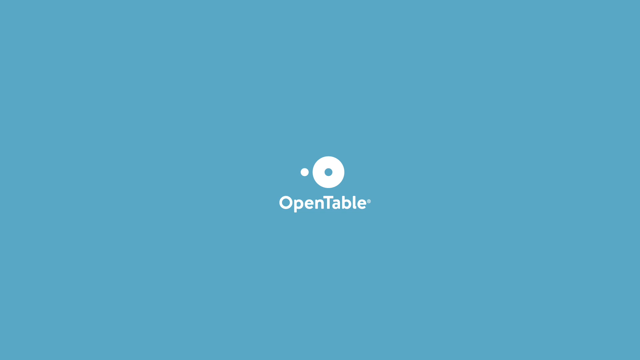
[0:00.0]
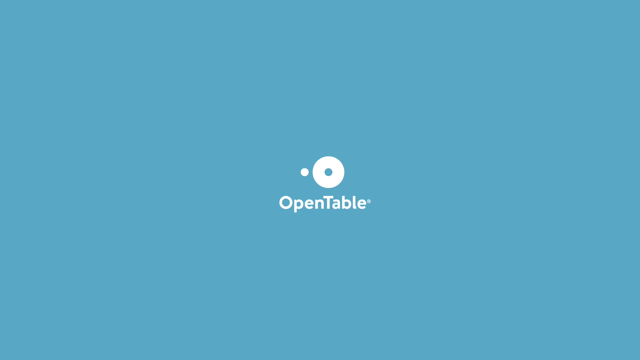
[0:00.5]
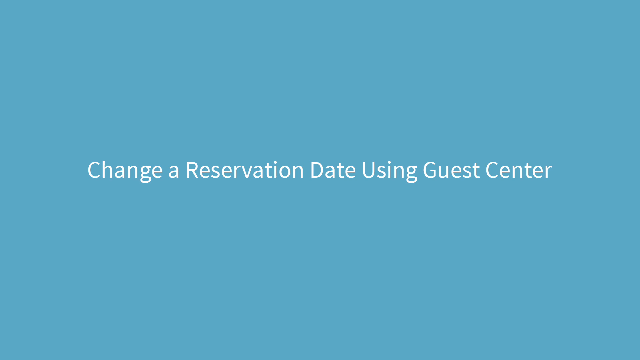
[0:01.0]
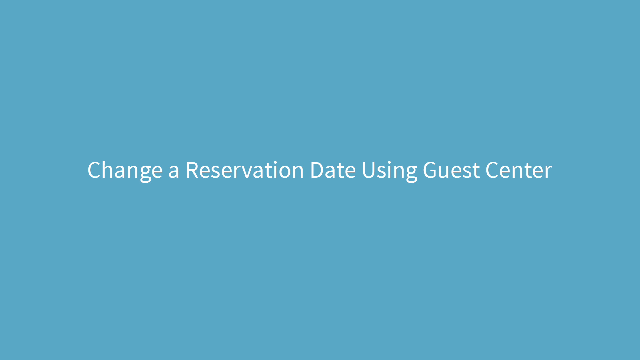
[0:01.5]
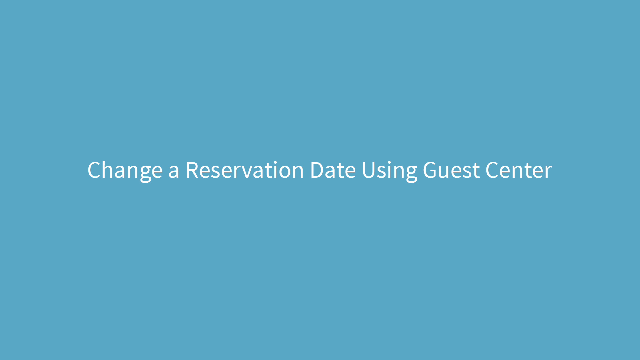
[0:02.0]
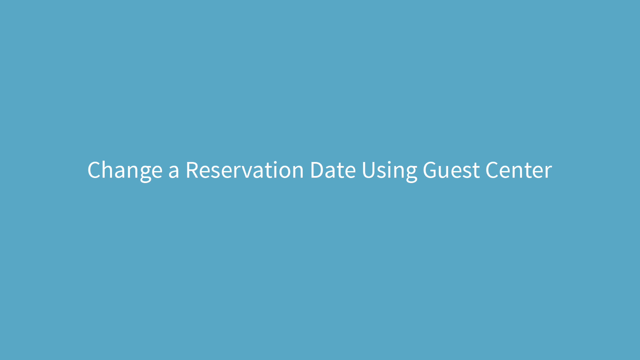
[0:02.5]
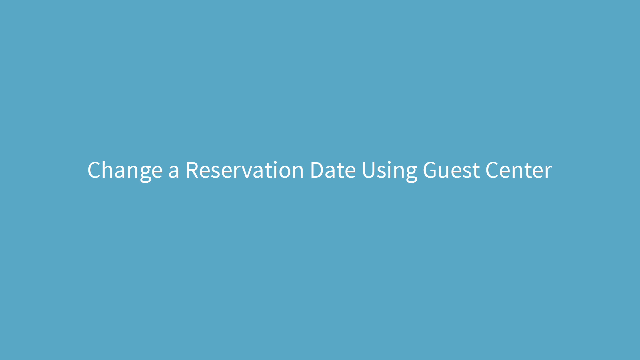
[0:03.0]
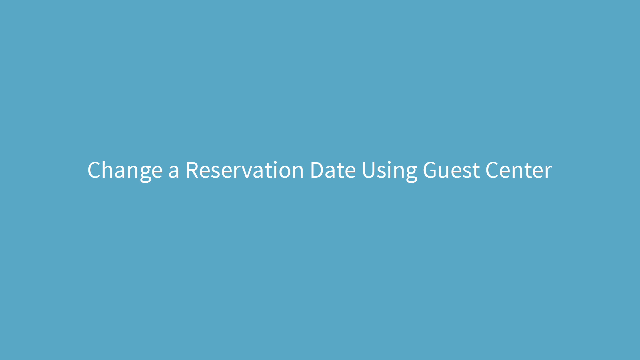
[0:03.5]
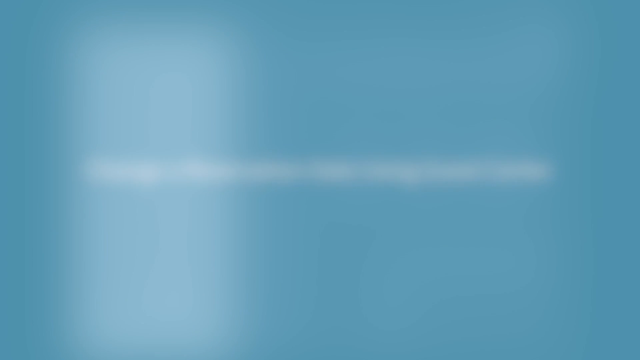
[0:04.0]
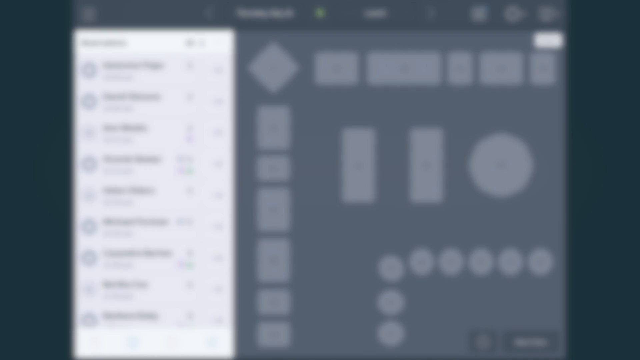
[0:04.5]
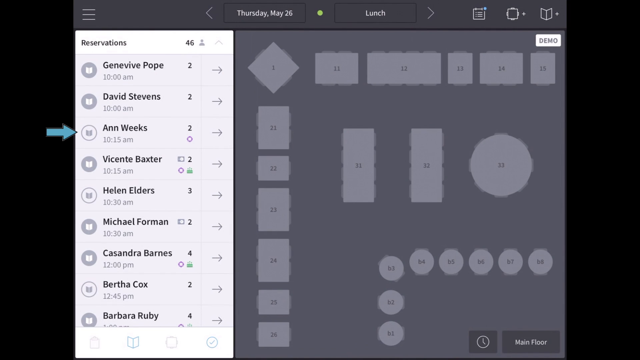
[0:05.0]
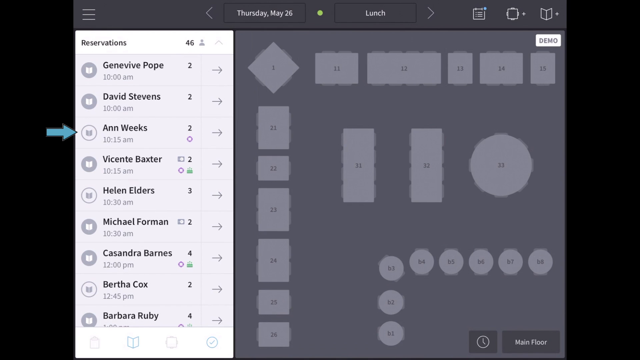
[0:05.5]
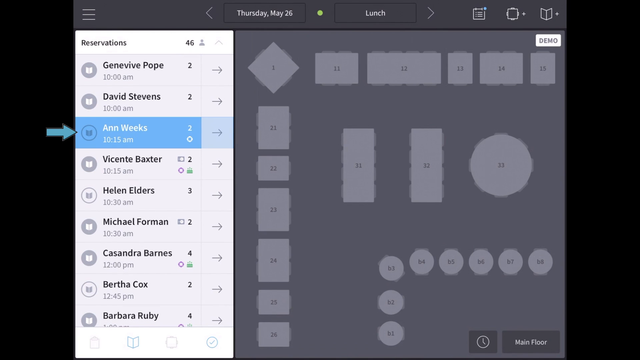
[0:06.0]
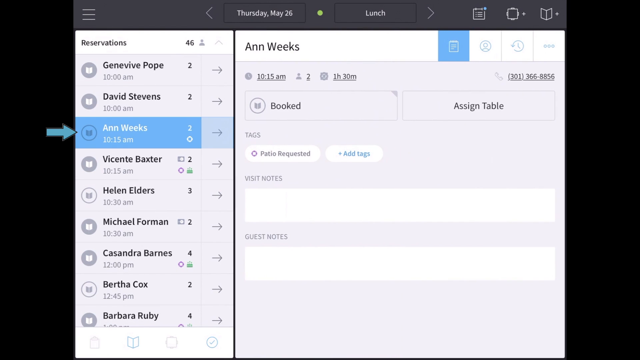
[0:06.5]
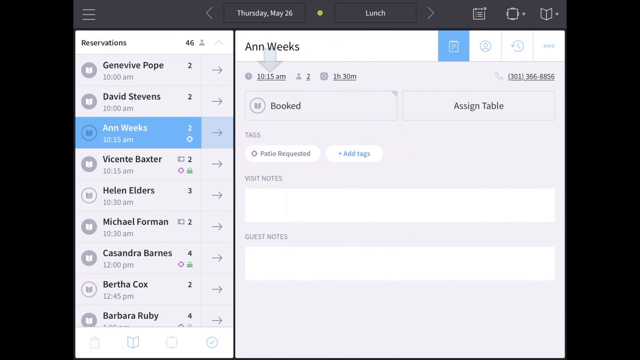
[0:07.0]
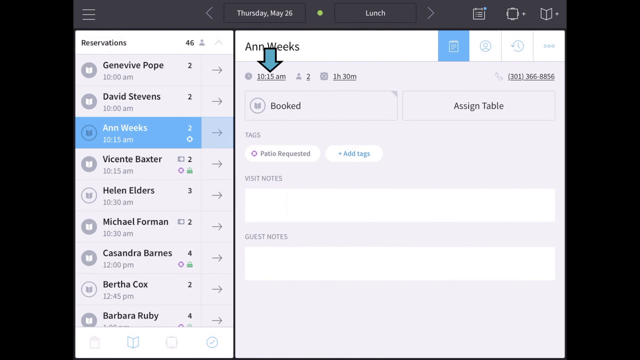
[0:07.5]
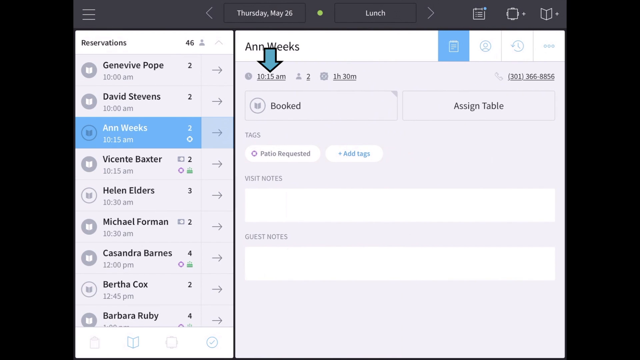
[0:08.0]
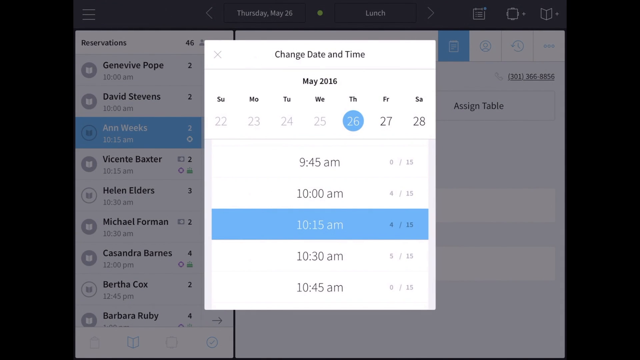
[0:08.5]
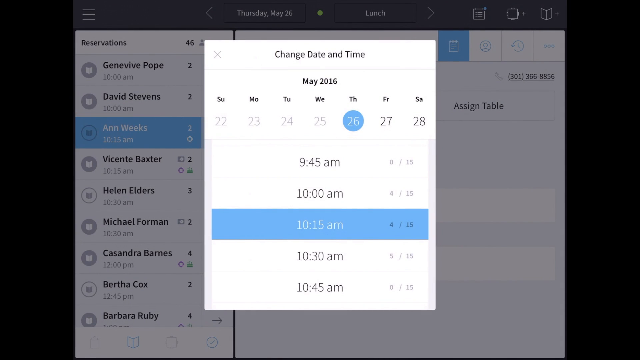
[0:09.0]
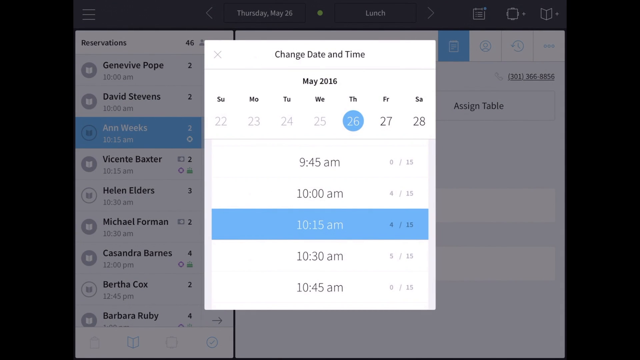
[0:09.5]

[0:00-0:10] The video illustrates the OpenTable software. It opens on the OpenTable logo: a teal background with white lettering and a white circle, or white annular region, with a small circle inside. That small circle has been moved outside the larger circle so that it looks like a chair at a table, an opening. The words on the slide read "open table" and "change a reservation date using guest center". A pull-down menu then appears, giving a name, and selecting it shows the reservation time and information.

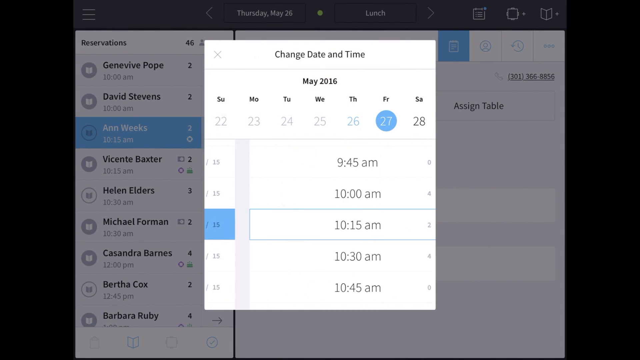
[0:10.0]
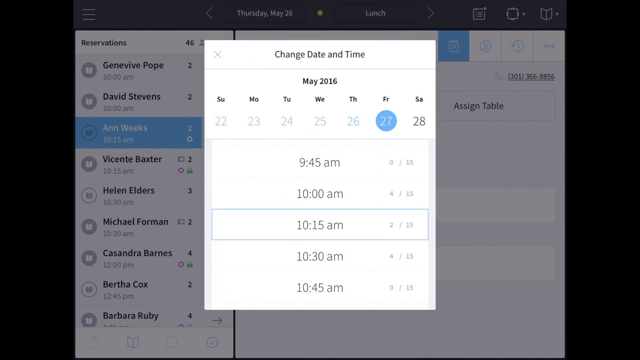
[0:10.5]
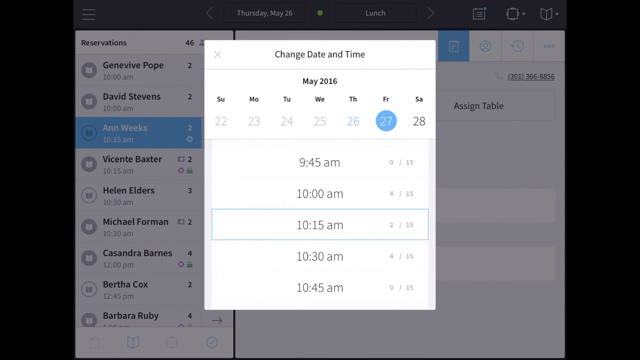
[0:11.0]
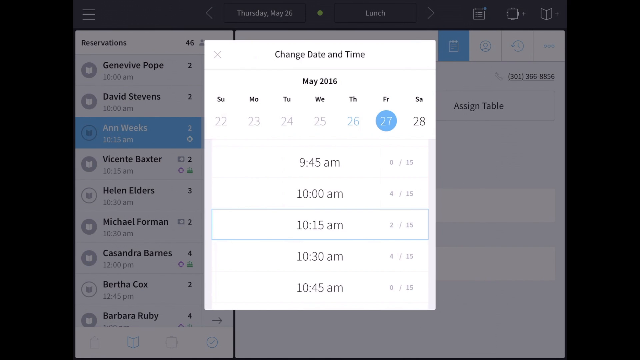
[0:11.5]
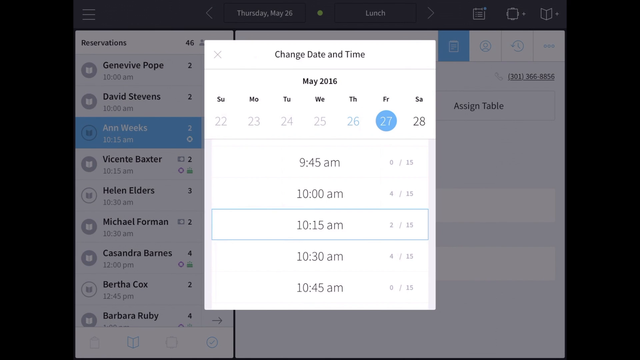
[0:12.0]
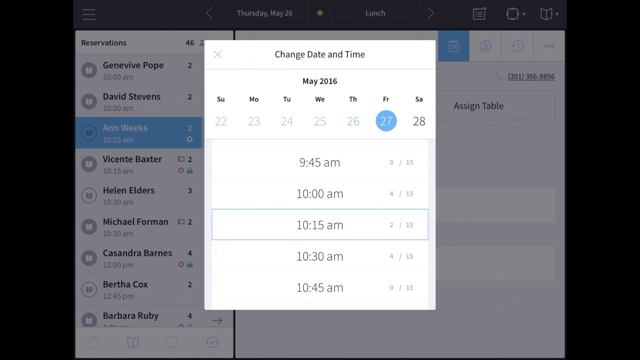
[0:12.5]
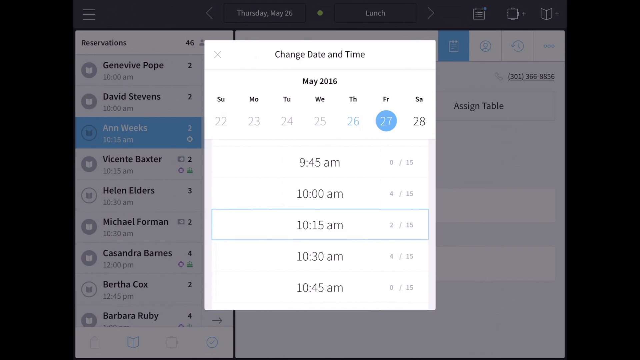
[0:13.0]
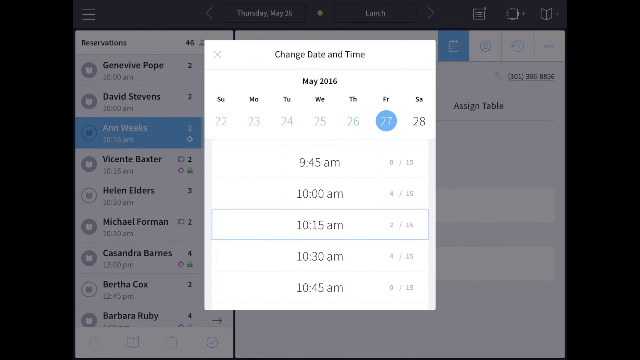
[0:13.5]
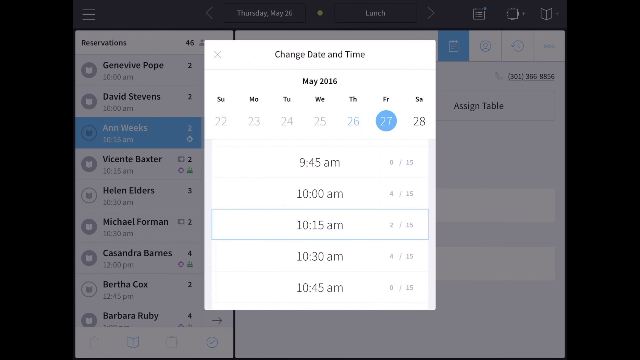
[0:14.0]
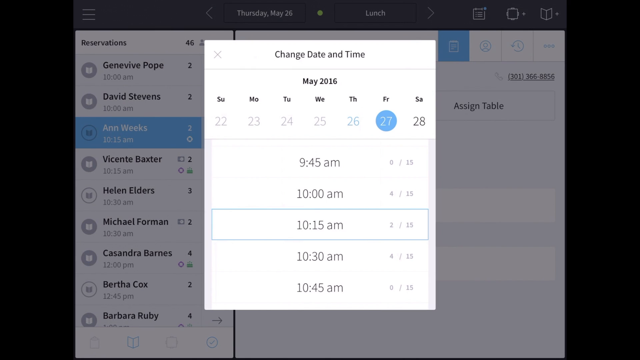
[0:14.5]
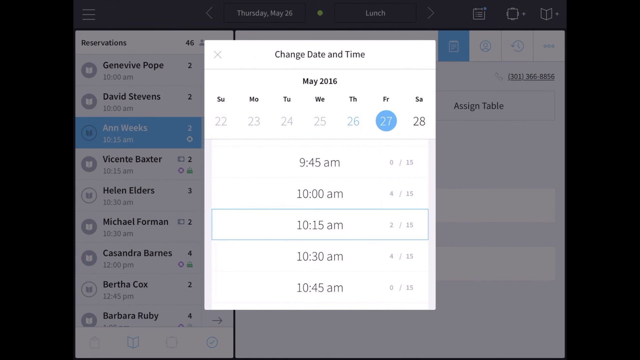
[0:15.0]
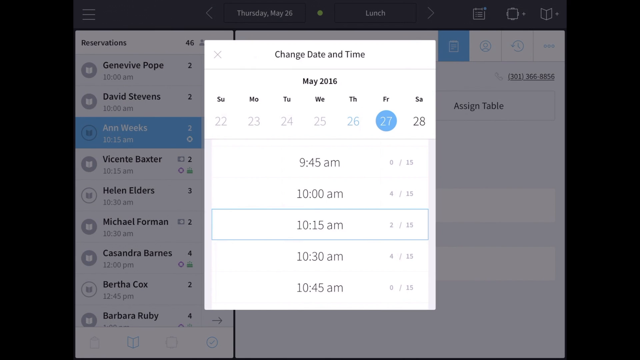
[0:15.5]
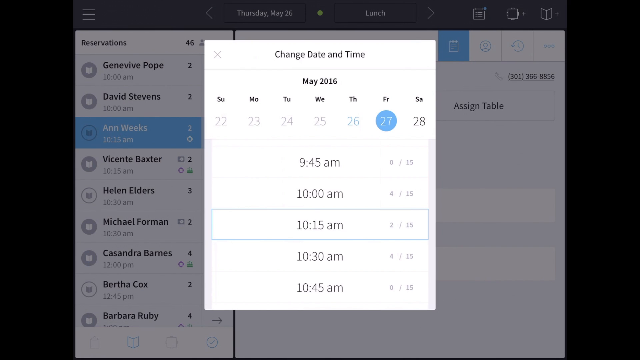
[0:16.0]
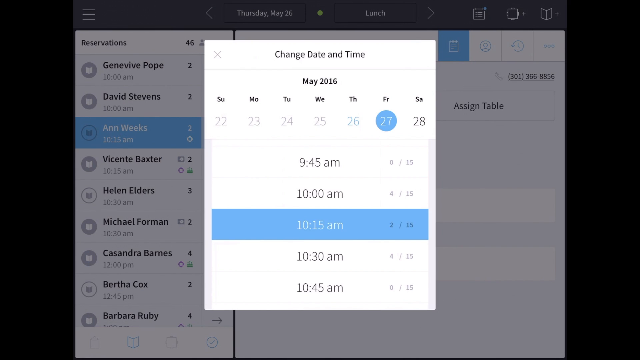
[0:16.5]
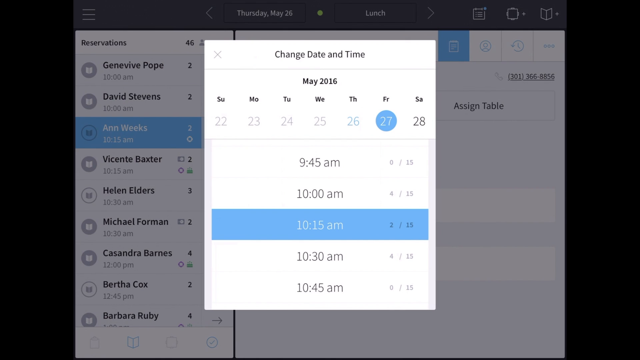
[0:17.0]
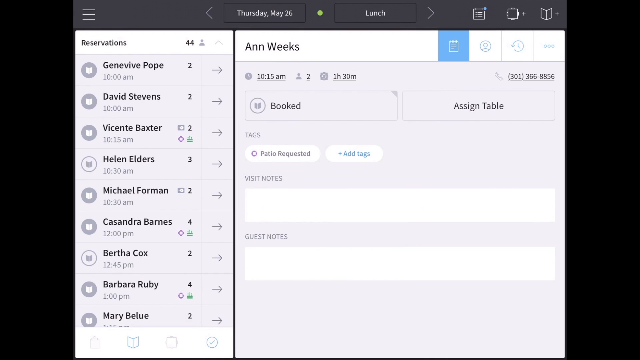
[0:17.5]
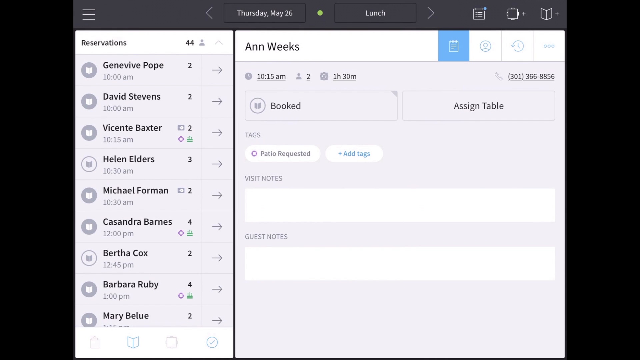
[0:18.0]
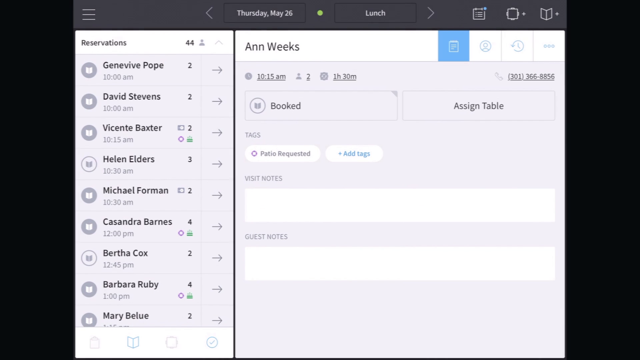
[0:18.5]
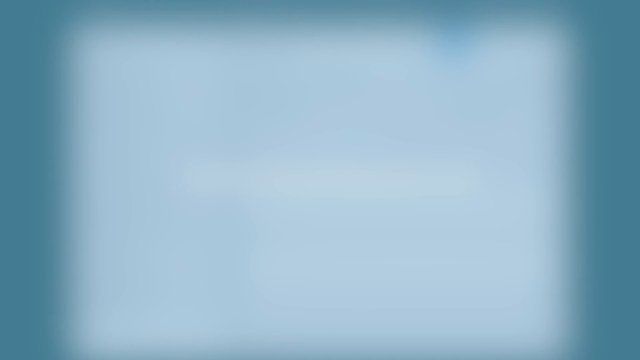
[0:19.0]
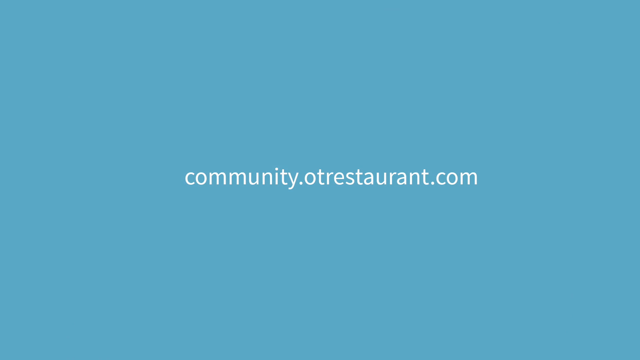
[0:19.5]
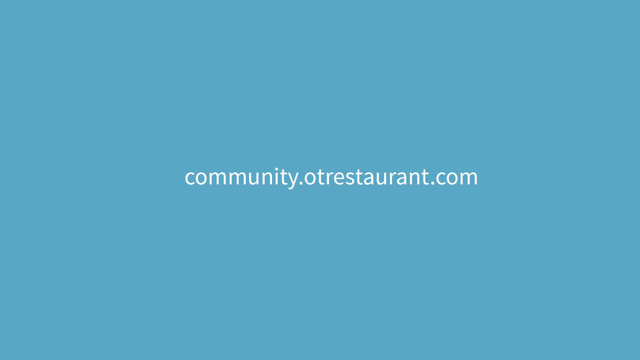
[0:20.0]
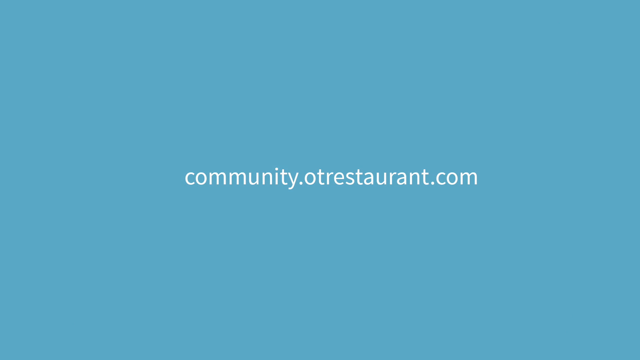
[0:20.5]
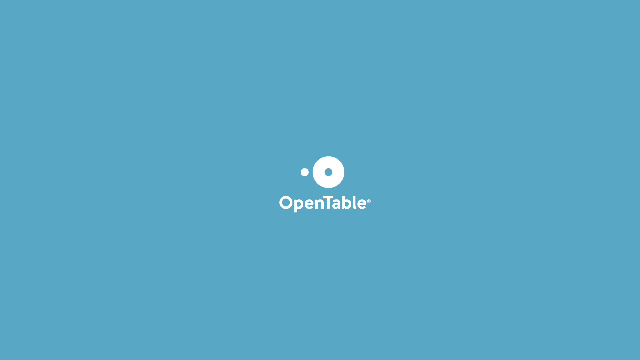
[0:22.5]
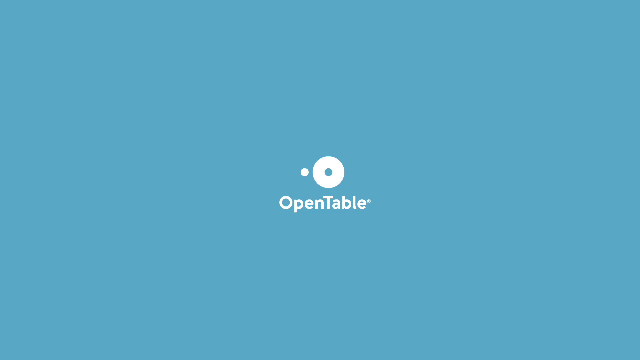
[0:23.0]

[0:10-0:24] A particular guest has been selected, and the screen reads "change date and time". A calendar appears with "May 2016" in a top horizontal bar. It is a week calendar in which Friday the 27th is highlighted. The time 10:15 AM is also highlighted with blue surrounding it, and it is clicked. It is then highlighted and changed to 10. The screen fades back, and a reference to "otrestaurant.com", which is OpenTable, appears. It then closes to the OpenTable logo at the center of the screen.